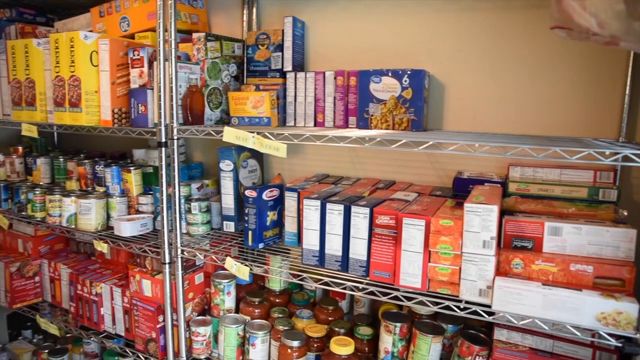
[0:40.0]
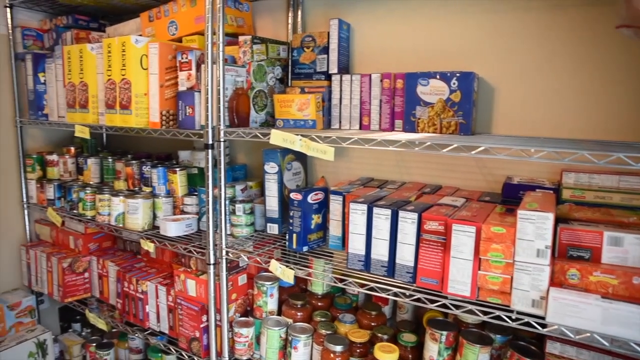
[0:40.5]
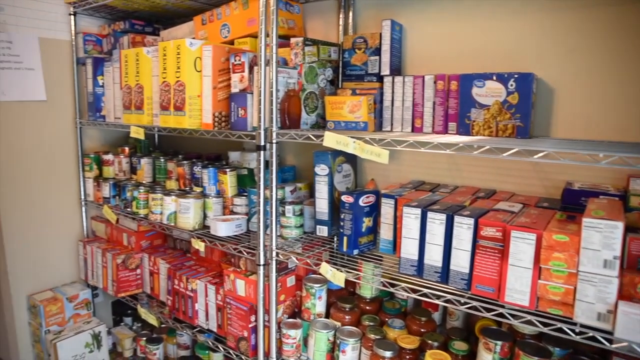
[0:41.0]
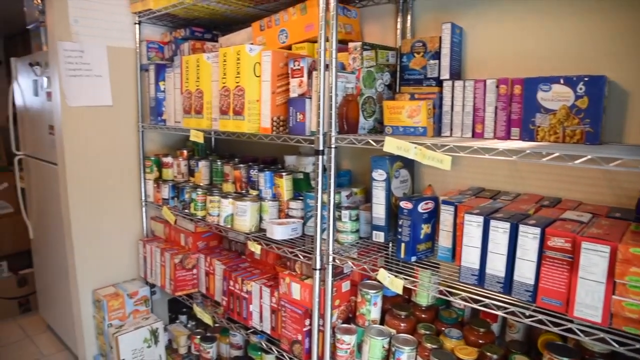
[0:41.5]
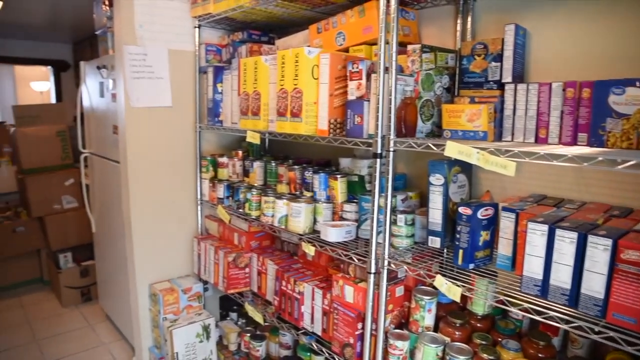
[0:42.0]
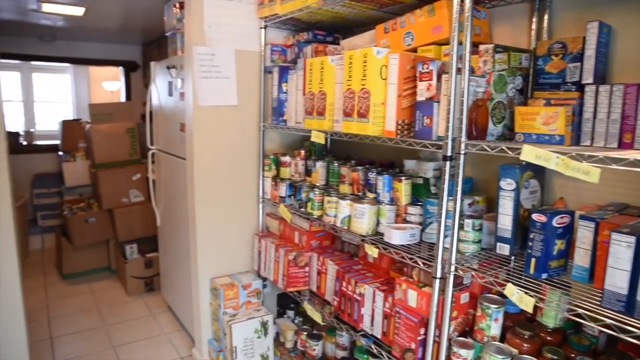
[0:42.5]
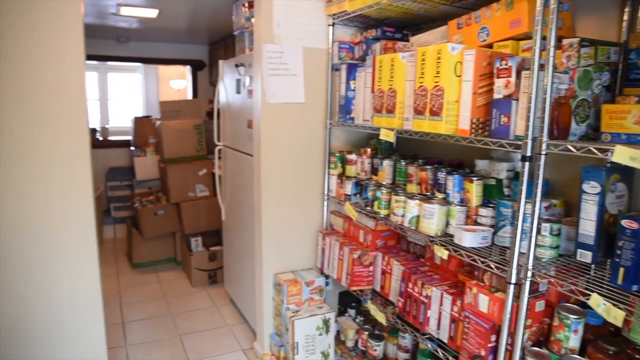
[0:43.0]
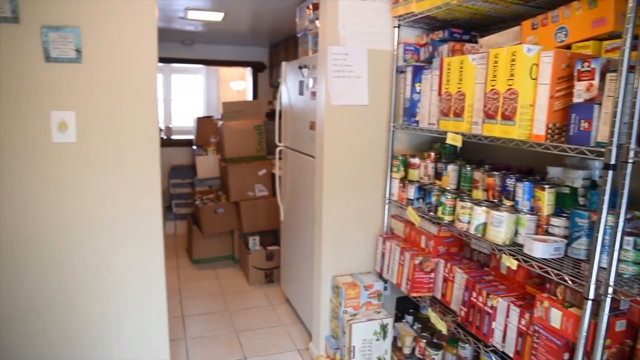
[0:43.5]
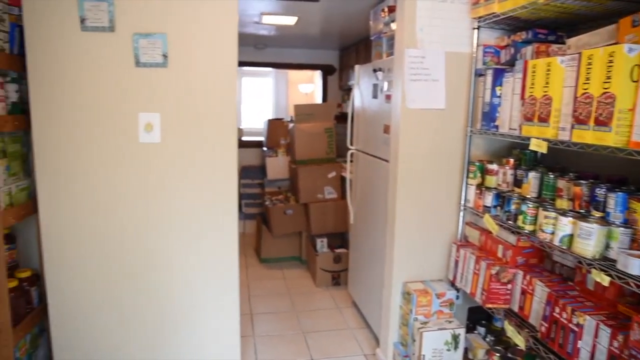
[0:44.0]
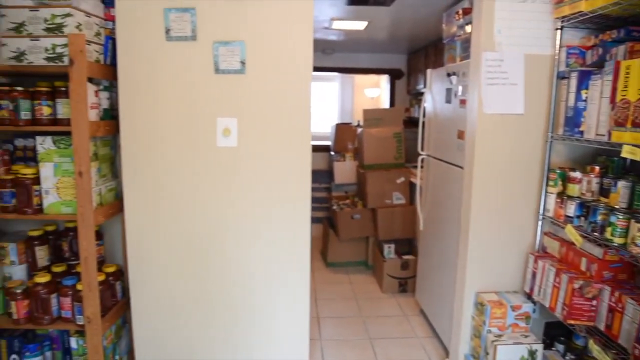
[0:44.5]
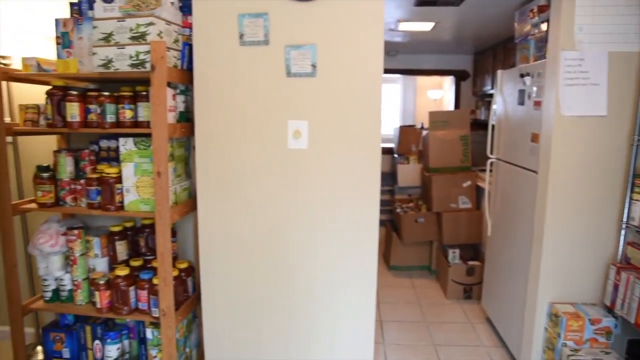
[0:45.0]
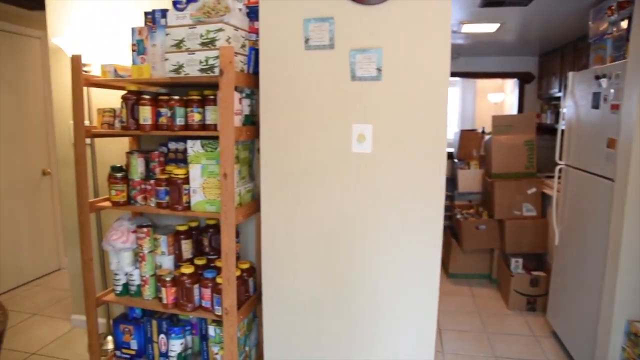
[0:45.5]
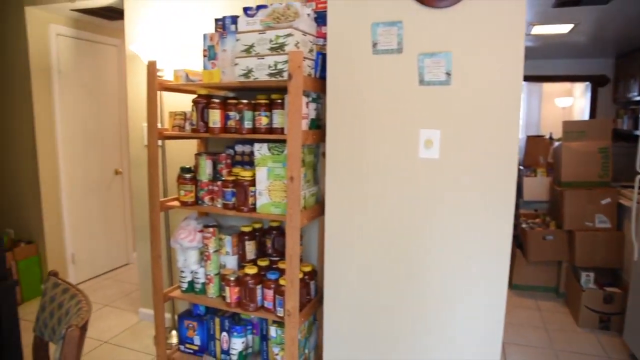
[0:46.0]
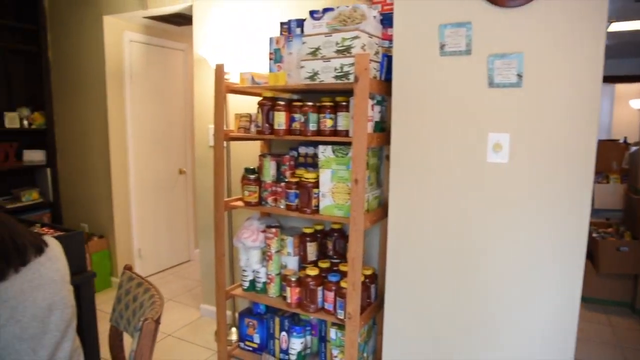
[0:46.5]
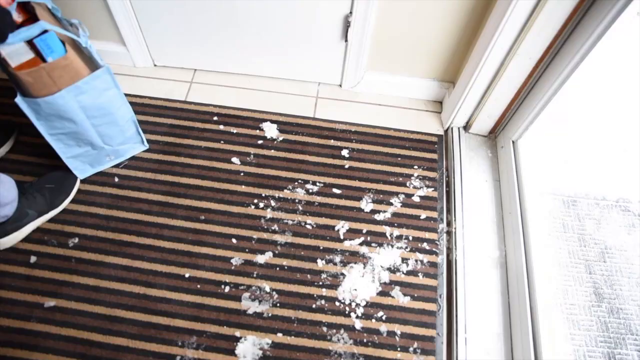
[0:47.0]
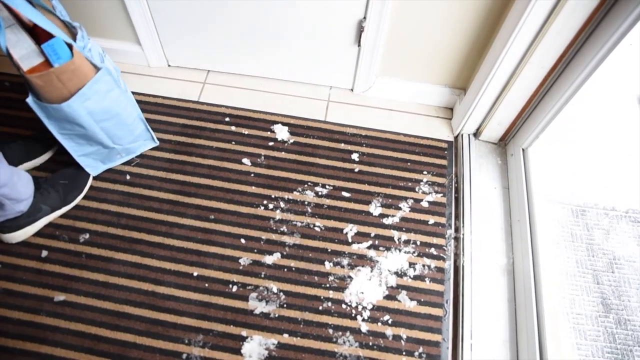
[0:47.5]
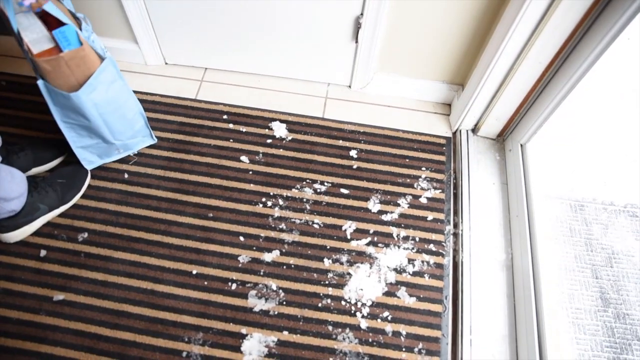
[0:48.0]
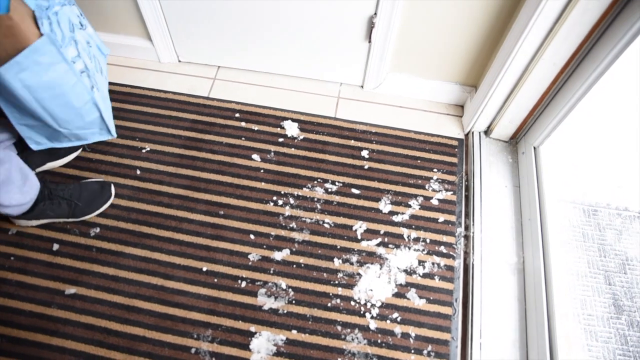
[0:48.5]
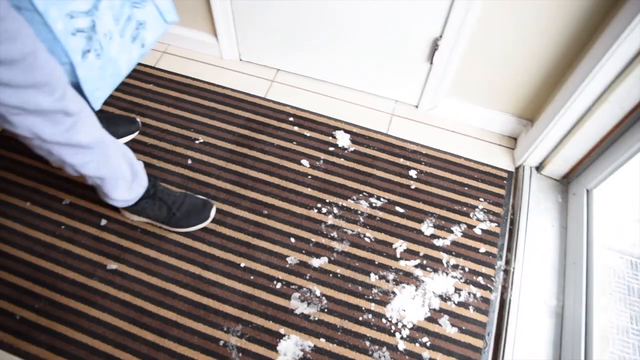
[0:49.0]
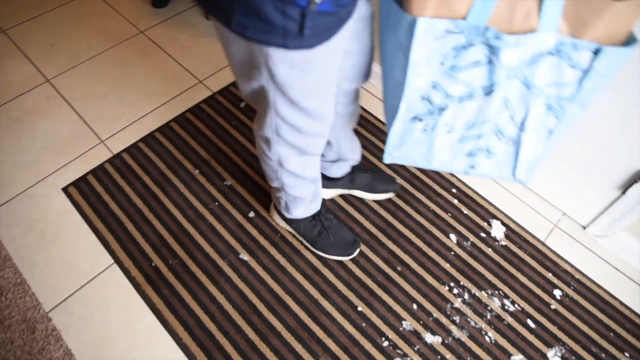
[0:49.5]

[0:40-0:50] A shelf holds different products and looks like a shelf for food or beverages, with rows of packaged foods, and the view also shows the other side of the shelf. The place is used as a store. Some products are in bottles, some in cartons, and some are open. There are red, pink and blue colours, and there are biscuits and crackers, all kept in a rack behind a brown wall.